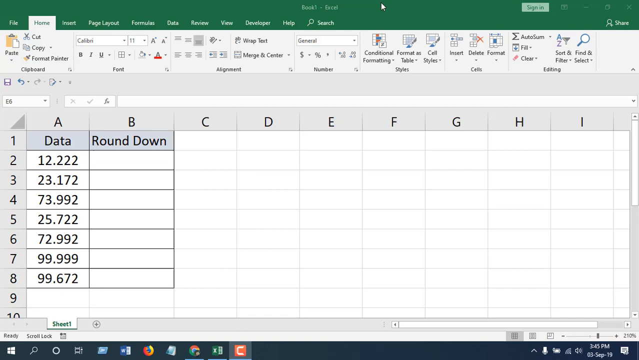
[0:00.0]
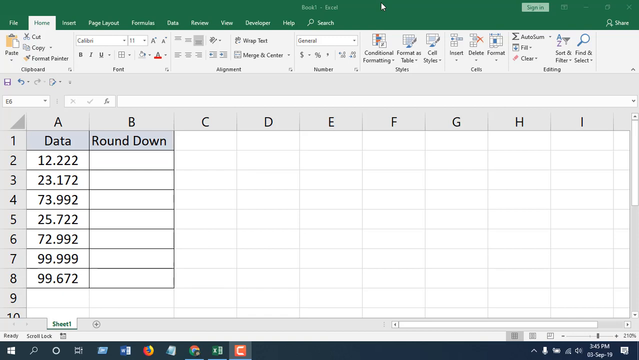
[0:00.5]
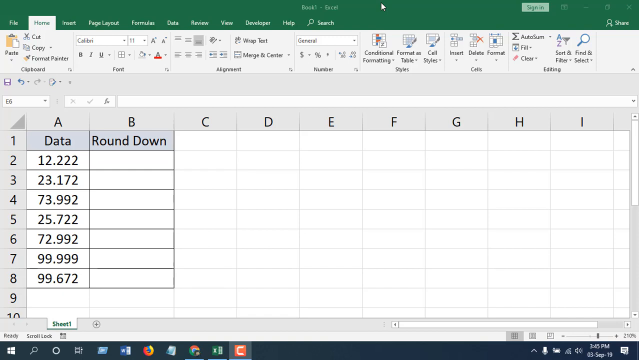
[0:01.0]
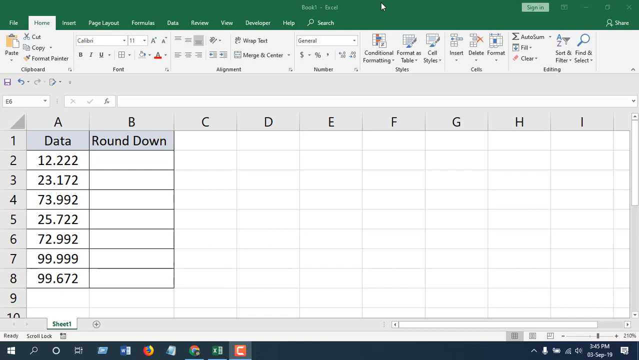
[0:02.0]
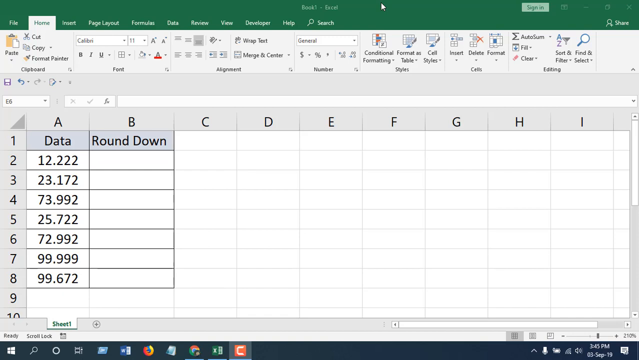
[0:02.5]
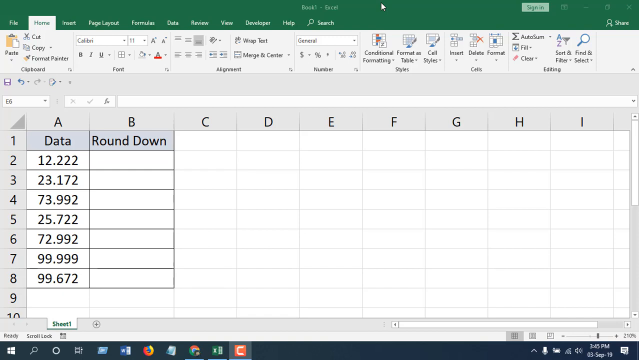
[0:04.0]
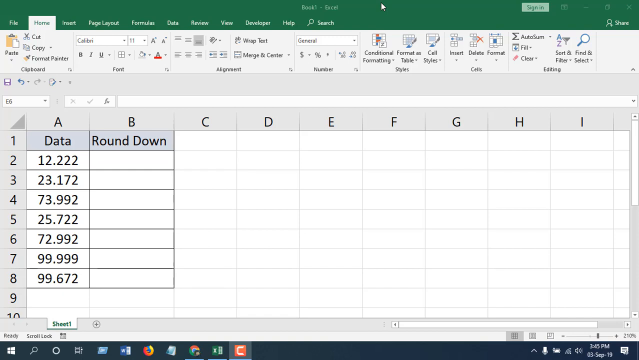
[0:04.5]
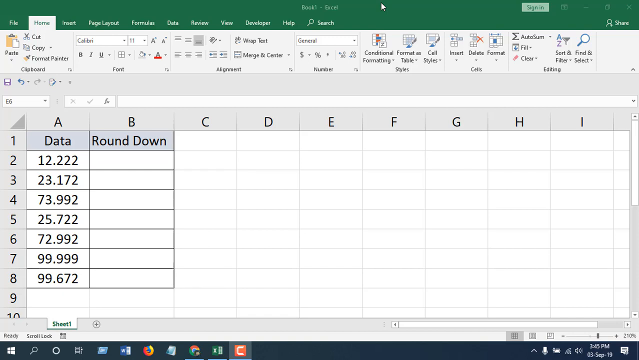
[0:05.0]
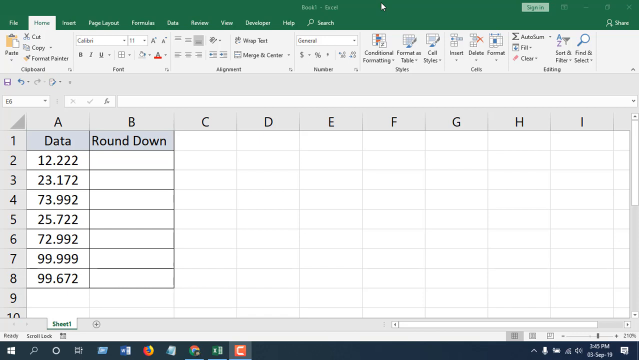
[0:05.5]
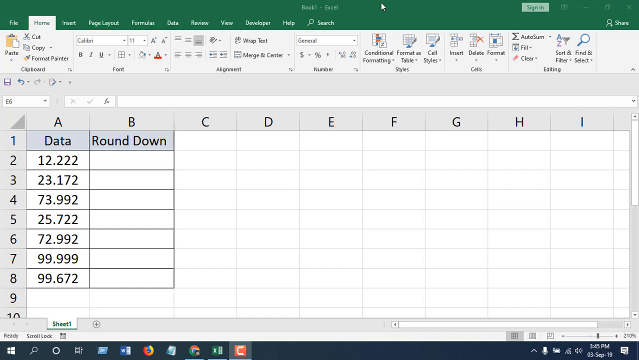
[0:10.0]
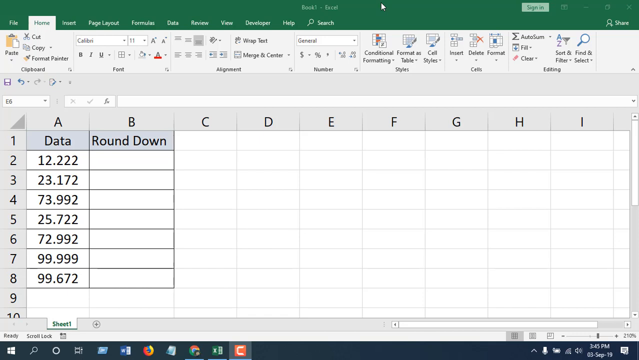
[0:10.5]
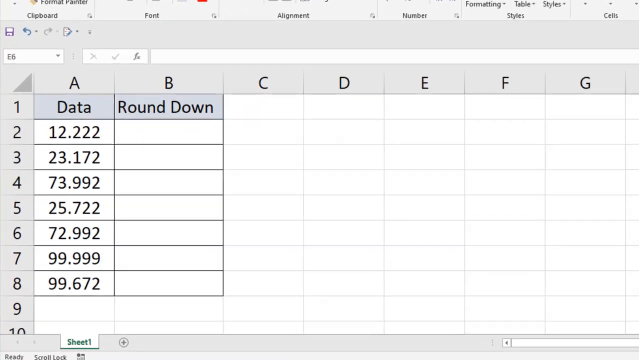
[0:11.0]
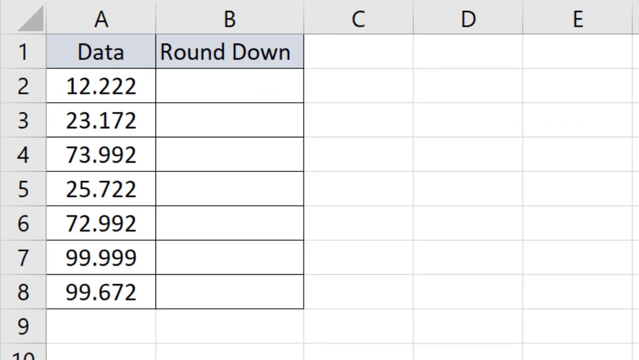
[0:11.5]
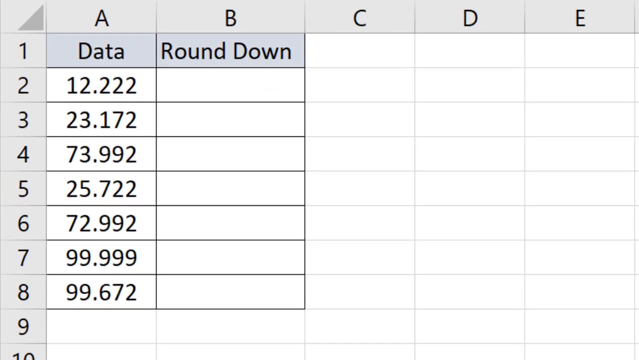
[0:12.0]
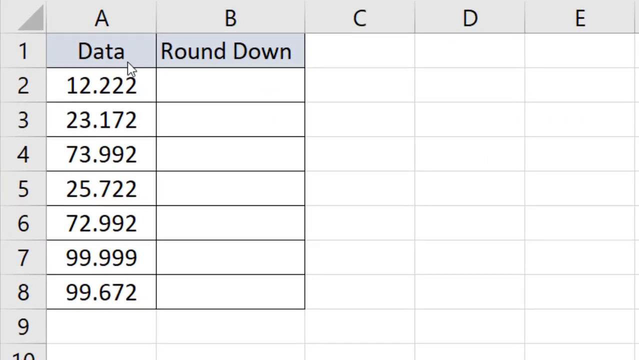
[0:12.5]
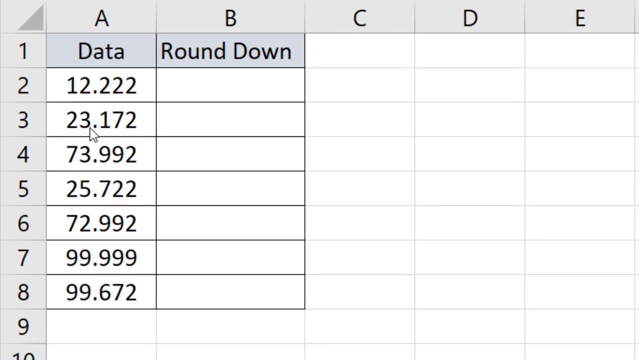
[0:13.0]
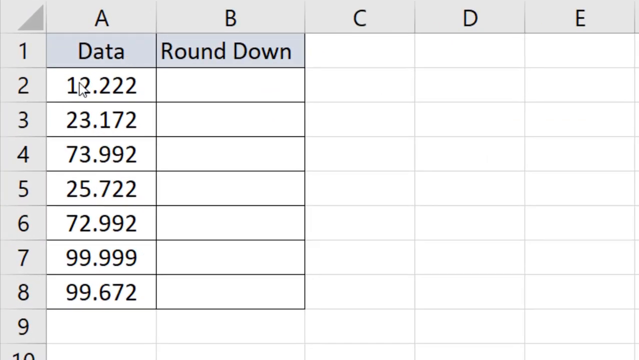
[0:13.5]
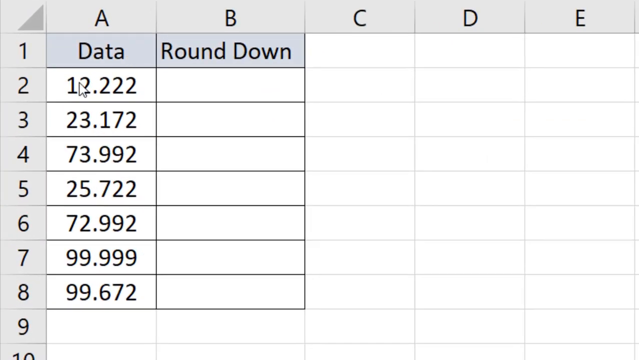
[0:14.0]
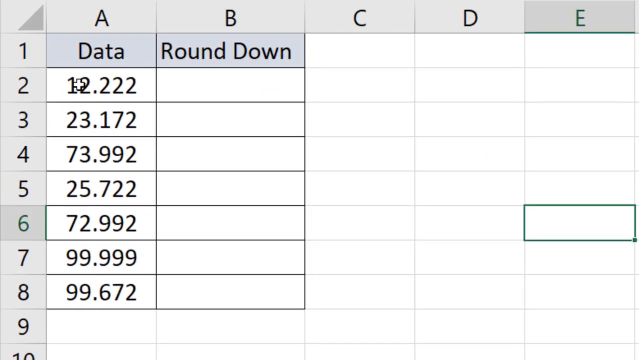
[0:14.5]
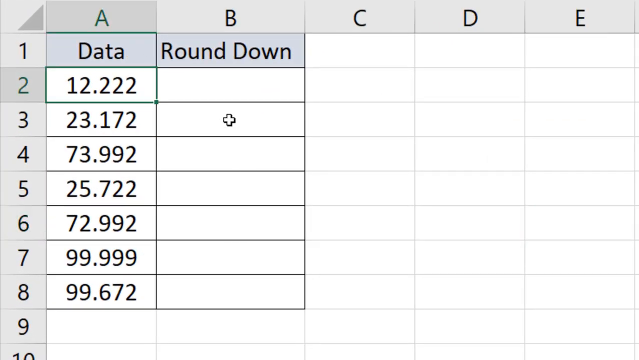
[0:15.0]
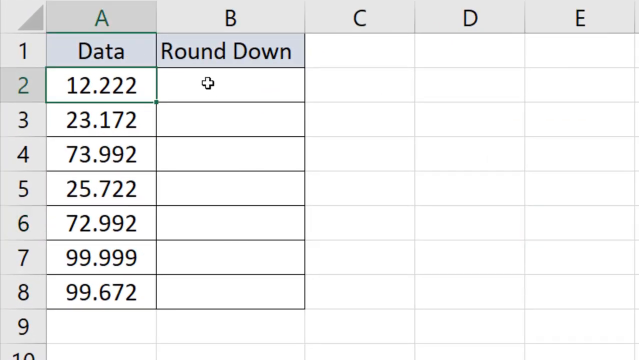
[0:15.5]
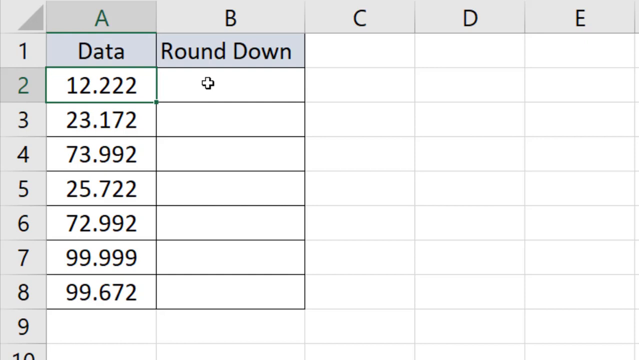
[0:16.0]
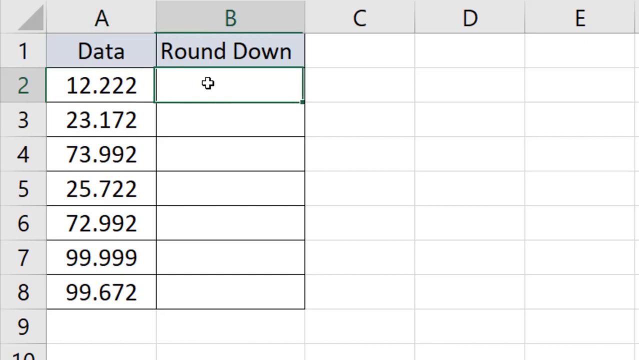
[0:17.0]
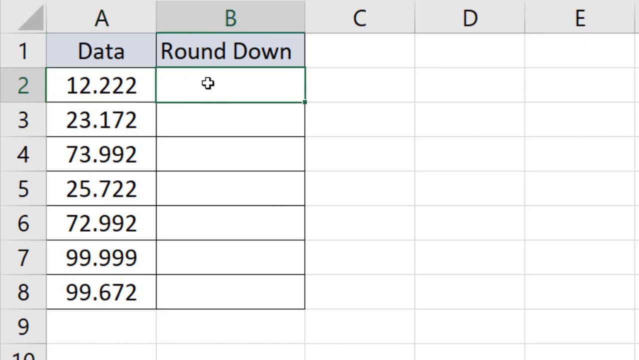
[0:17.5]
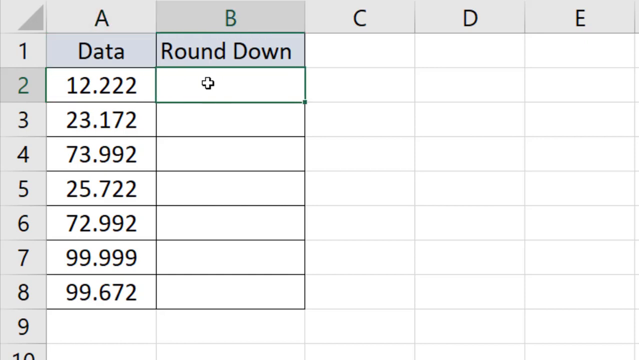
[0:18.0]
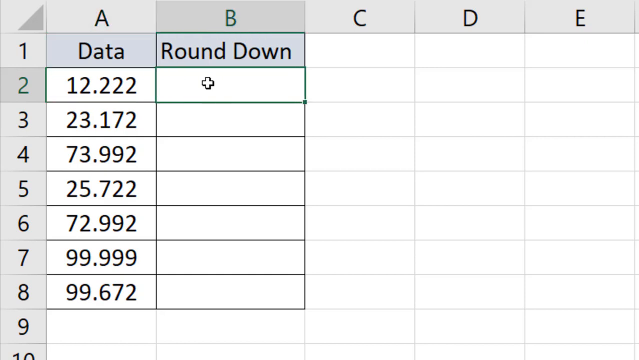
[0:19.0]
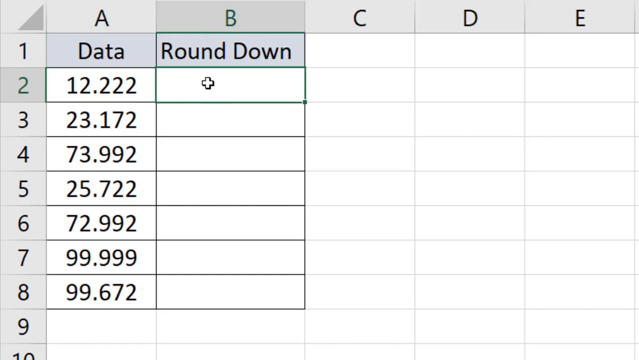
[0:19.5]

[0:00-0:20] A computer screen shows a page with columns A, B, C, D and E, with data and round down. Numbers appear on the page, including 2,222; row 3 with 23 and 1,172; 73, 902 and 992; row 5 with 25 and 722; and row 6 with 72 and 992. No people, clothes, animals or trees appear; there is only the computer screen with the numbers.